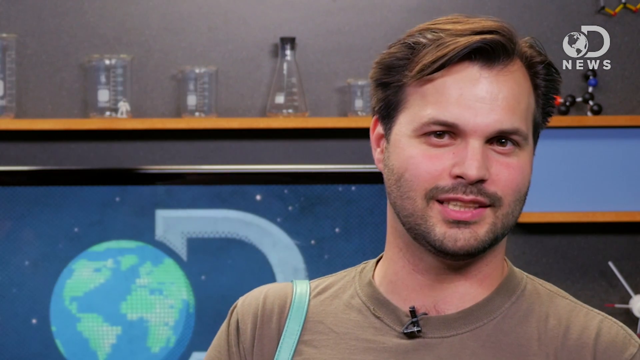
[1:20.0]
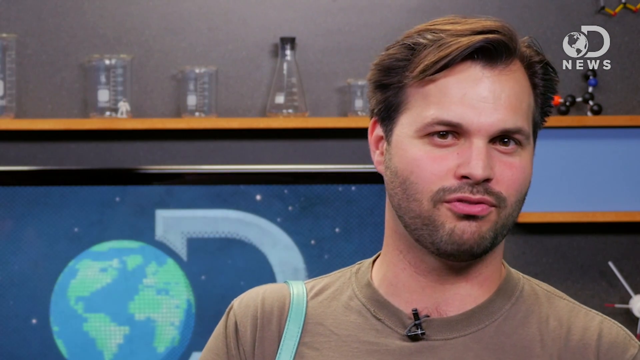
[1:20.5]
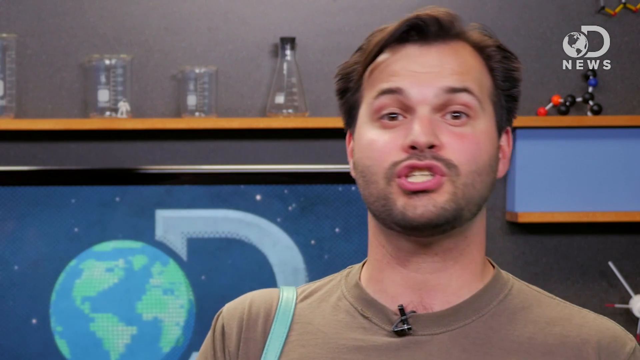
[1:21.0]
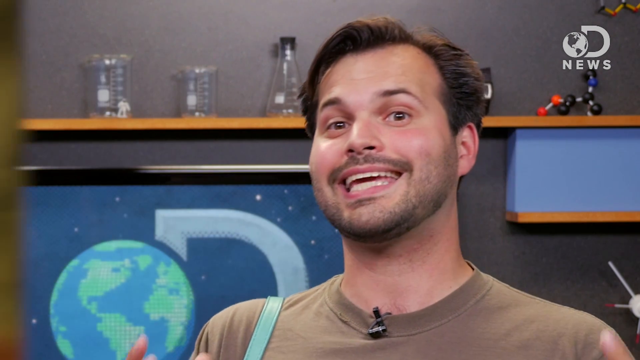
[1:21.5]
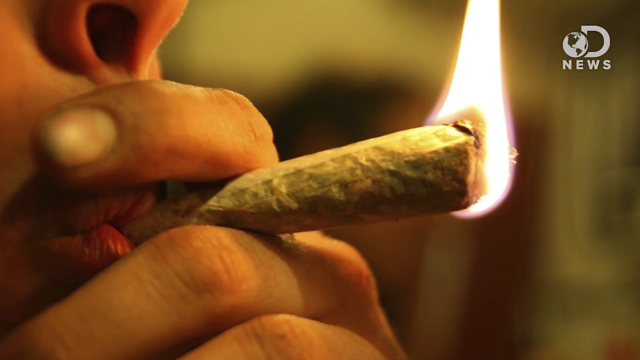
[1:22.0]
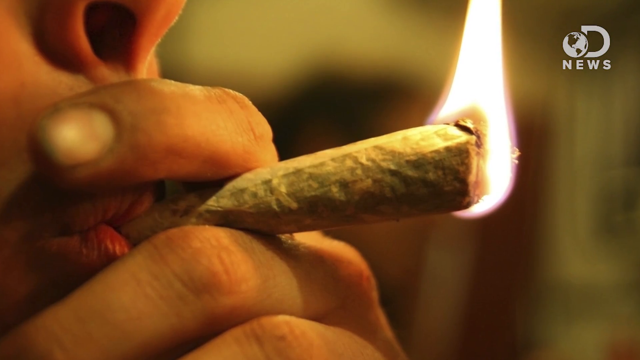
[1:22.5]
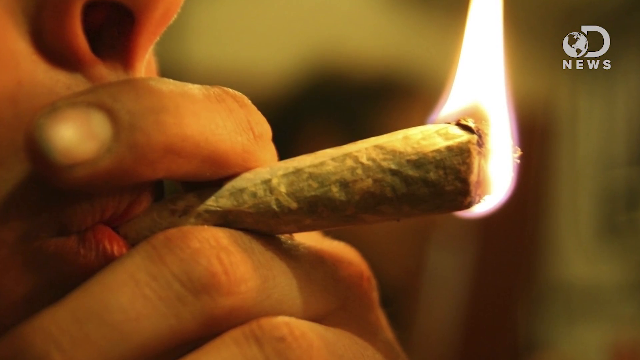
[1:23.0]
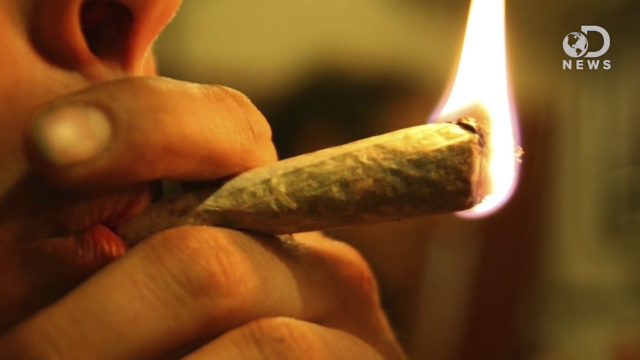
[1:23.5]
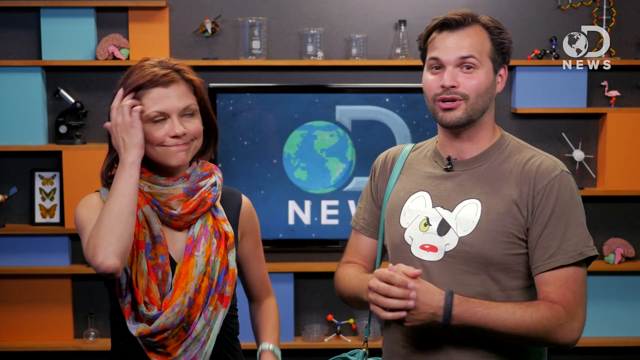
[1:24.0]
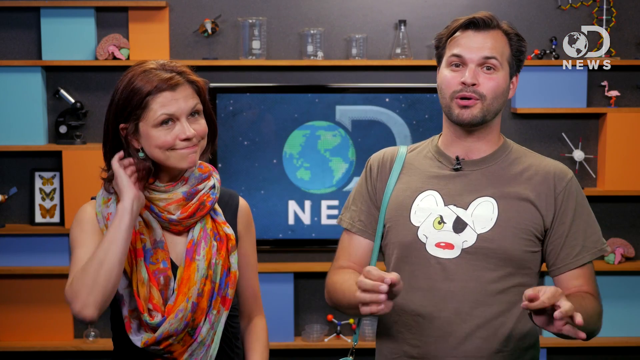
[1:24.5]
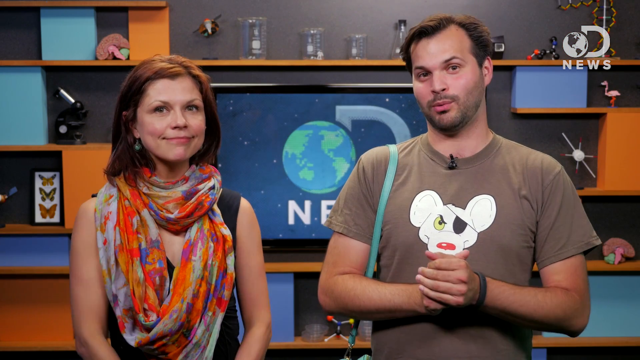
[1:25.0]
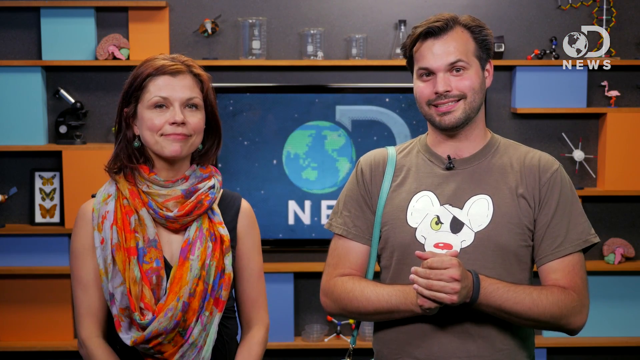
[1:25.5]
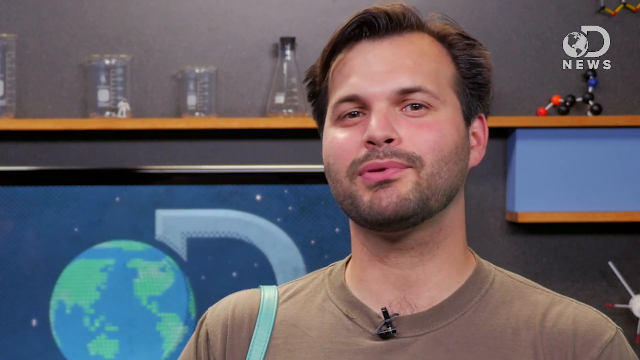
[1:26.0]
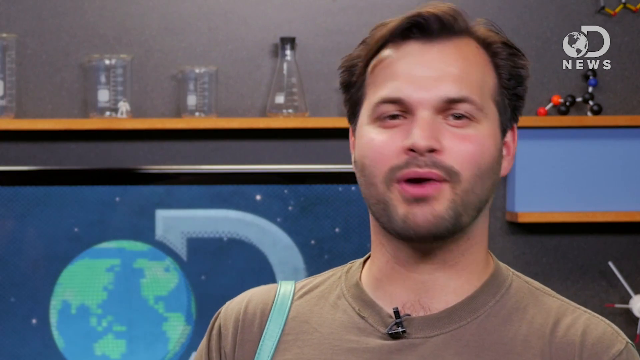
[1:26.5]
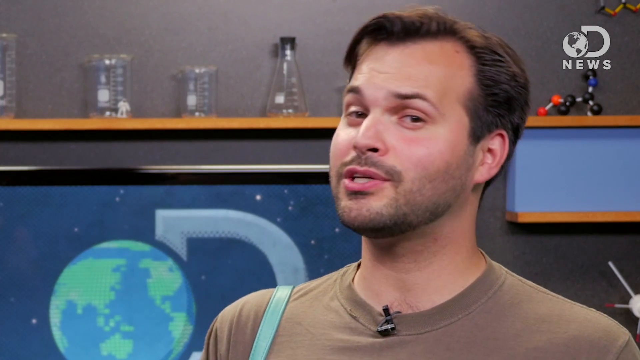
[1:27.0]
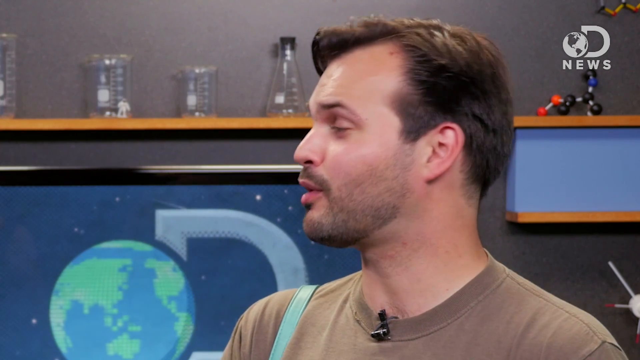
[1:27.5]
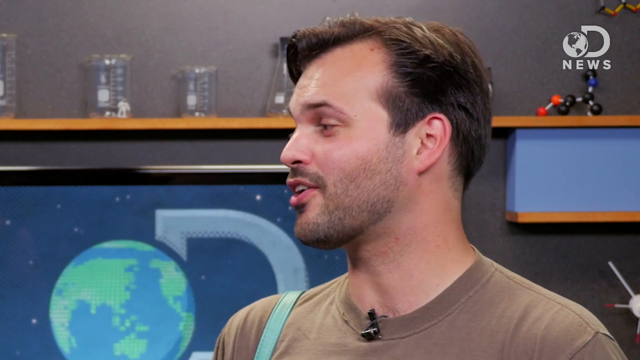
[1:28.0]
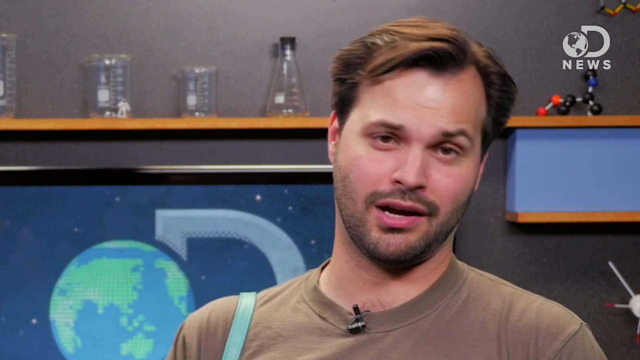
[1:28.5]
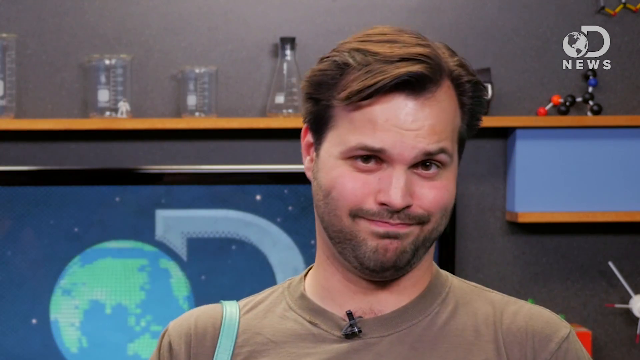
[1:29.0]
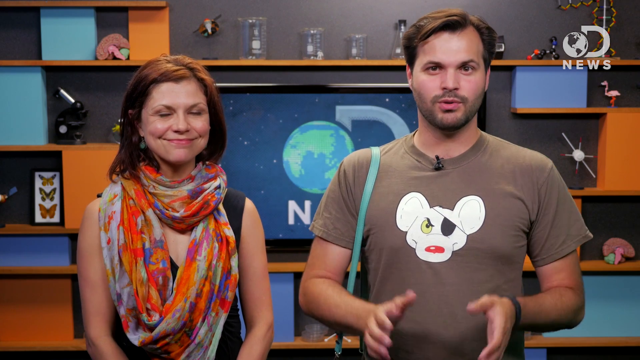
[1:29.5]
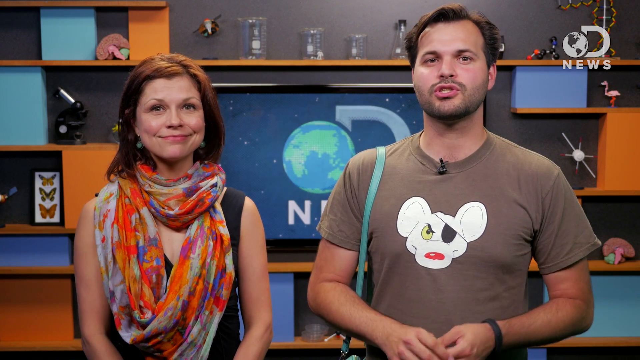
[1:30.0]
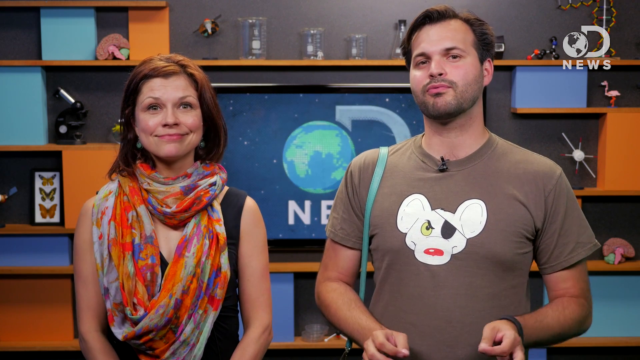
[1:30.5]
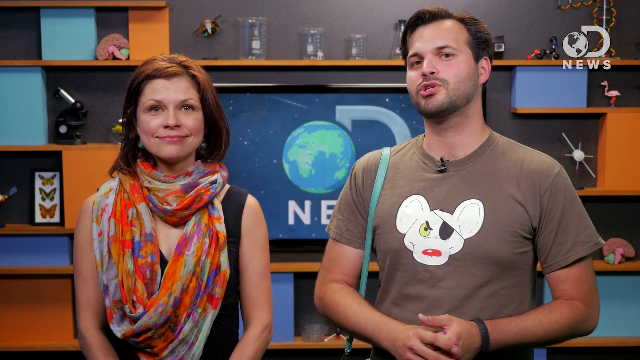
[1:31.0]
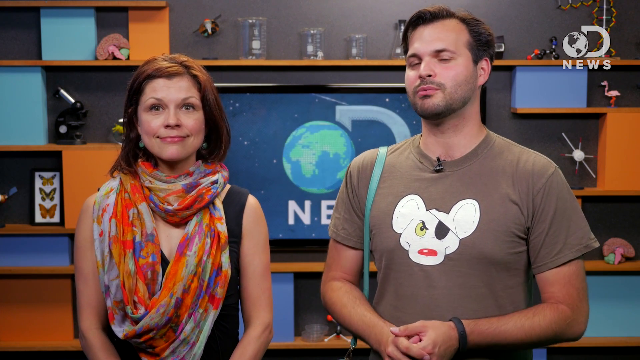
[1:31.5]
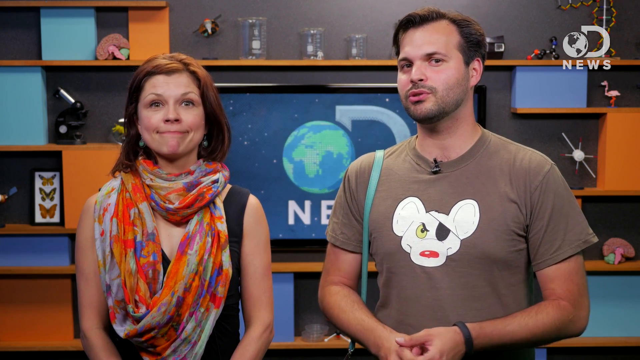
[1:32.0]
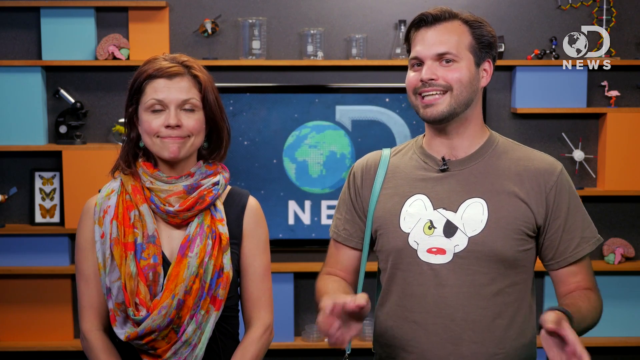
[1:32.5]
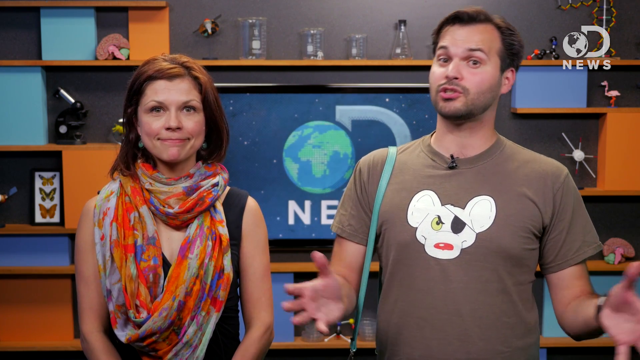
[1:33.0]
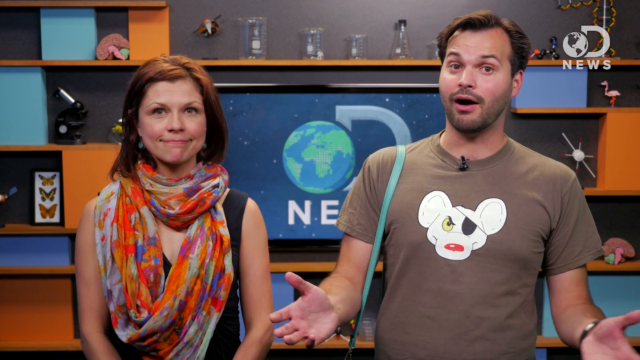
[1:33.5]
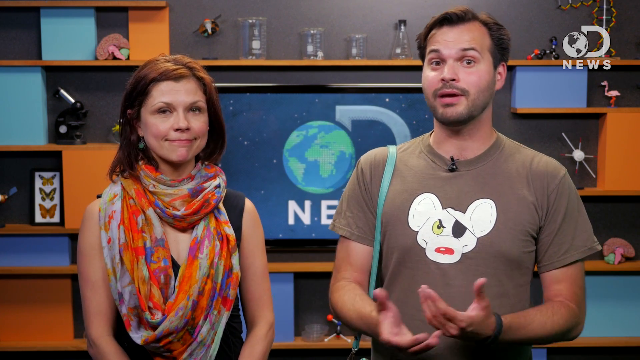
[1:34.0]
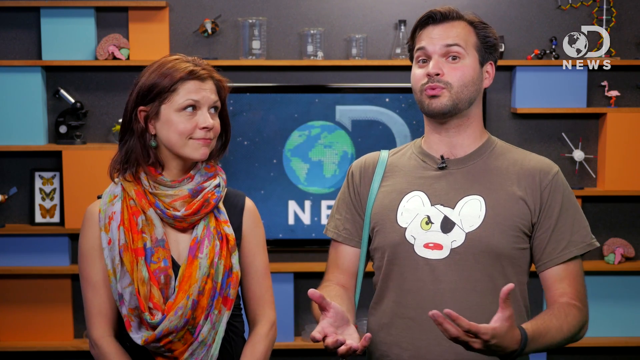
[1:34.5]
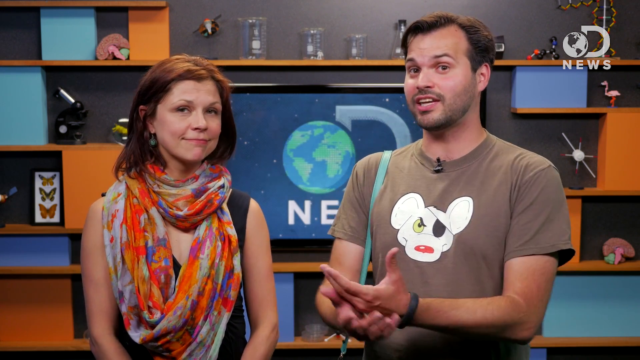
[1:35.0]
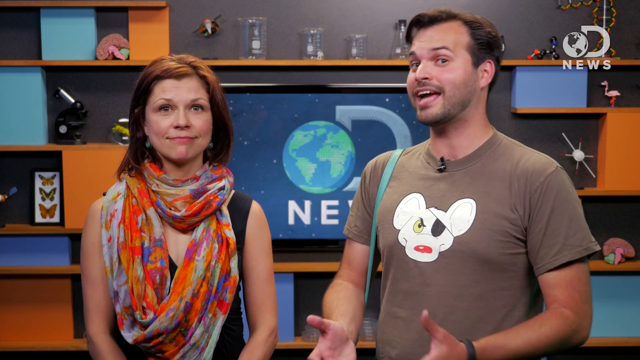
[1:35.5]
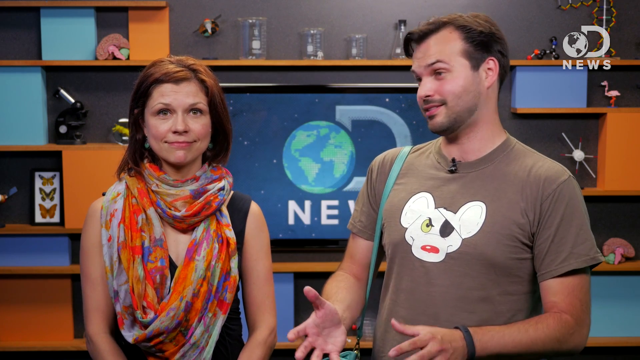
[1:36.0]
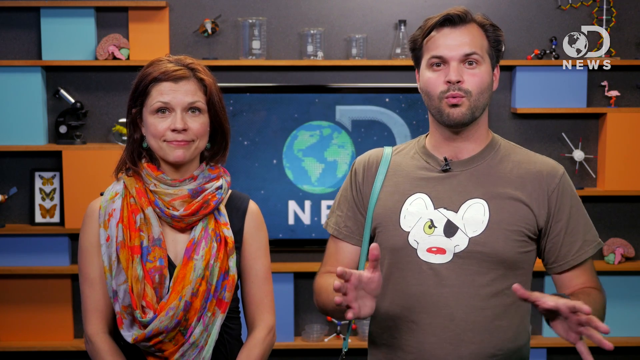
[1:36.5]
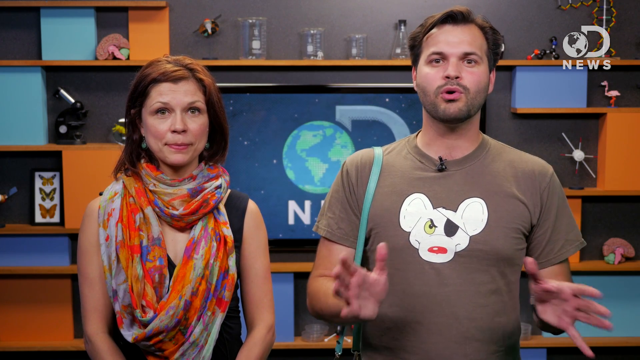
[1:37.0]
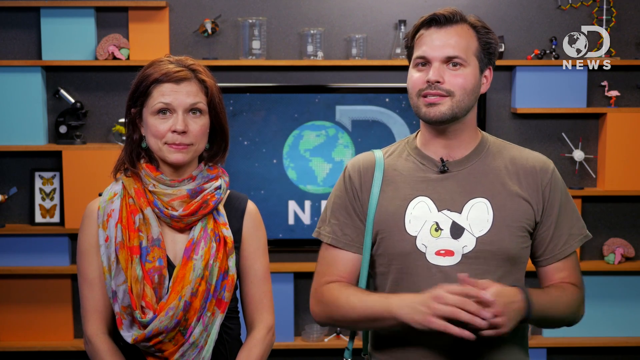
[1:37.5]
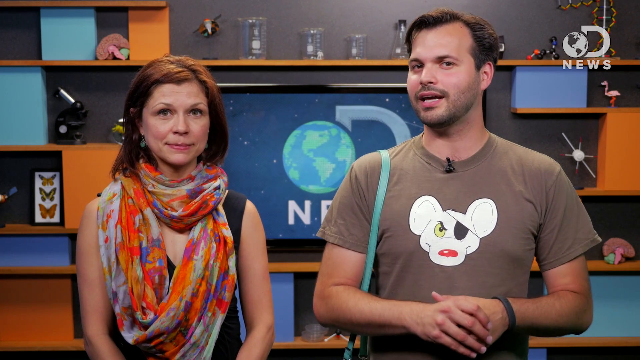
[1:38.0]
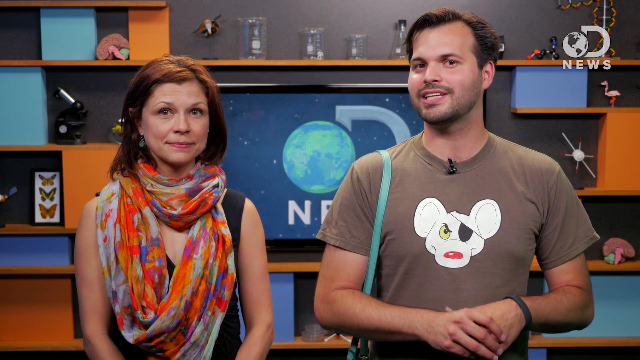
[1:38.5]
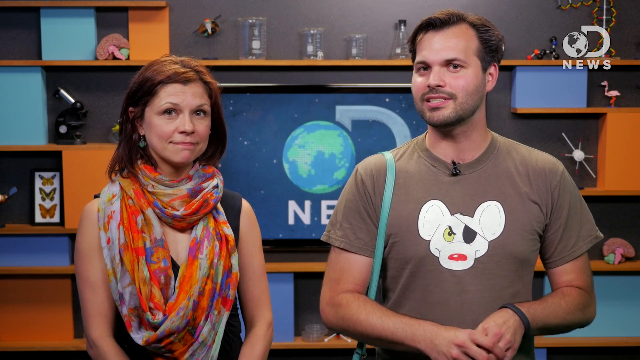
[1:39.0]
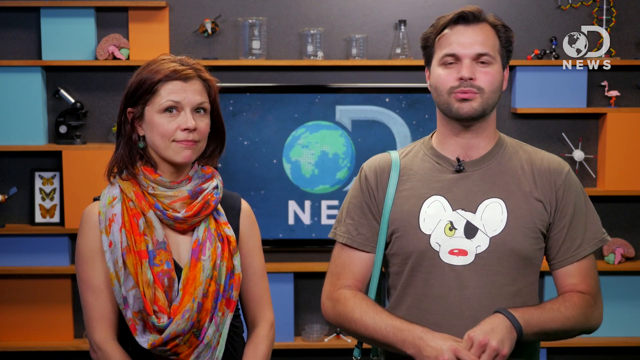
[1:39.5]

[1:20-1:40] The man wears the lady's teal green purse over his shoulder. He has kind of a goatee and mustache. The DNews logo is on the monitor in the background, with science flasks and a shelf that is kind of an orange color. He wears a greenish, almost green-gray shirt with a mouse on it that has an eye patch and red nose. He talks to the camera. A graphic shows somebody smoking what looks like marijuana, seemingly in a greenish color. The flame is kind of white with a little pinkish hue around it. The person smoking is white. Back with the reporters, he is still wearing the lady's green teal purse, and the camera focuses in on him. Then it returns to both of them; she wears the tie-dye-looking scarf, which actually has splattered paint on it in orange, yellow, green, blue and white. Her hair is kind of reddish brown. The reporters are white. The microscope is briefly seen on the left side of the screen.